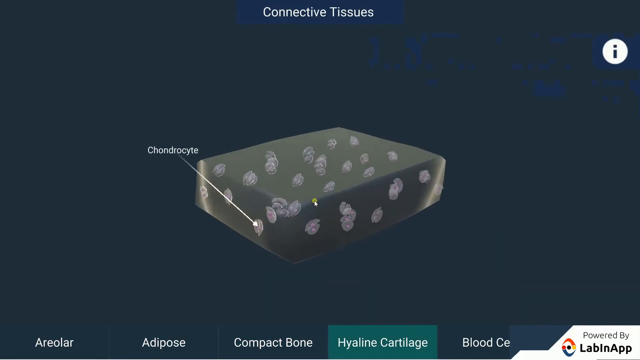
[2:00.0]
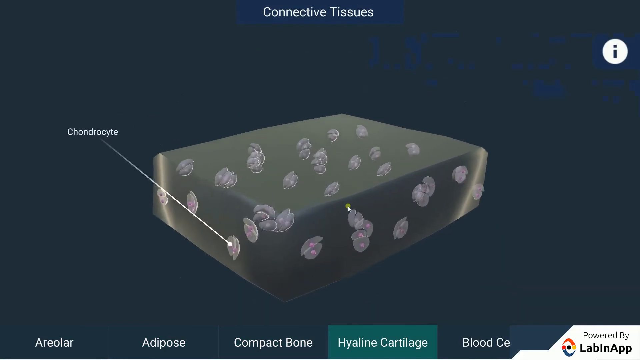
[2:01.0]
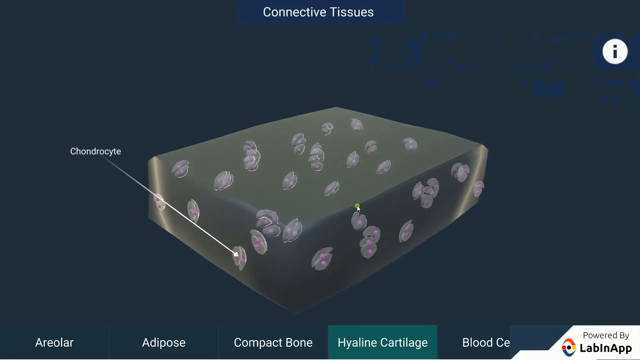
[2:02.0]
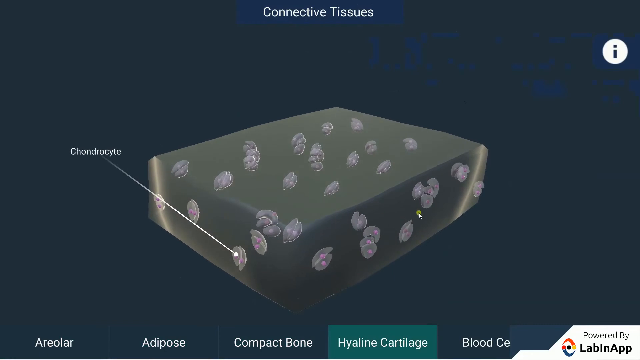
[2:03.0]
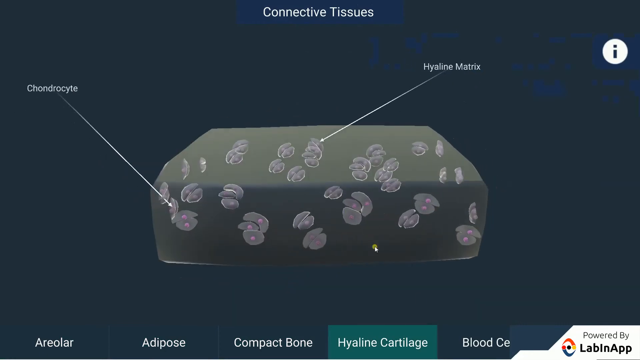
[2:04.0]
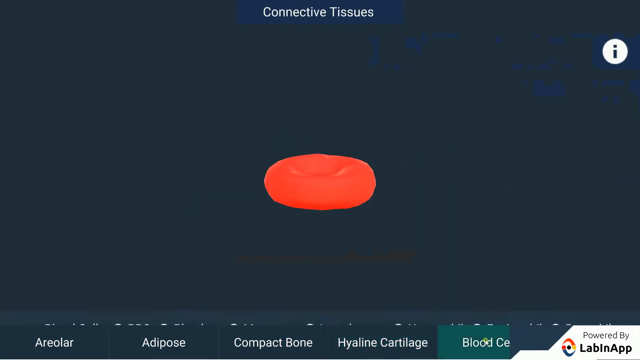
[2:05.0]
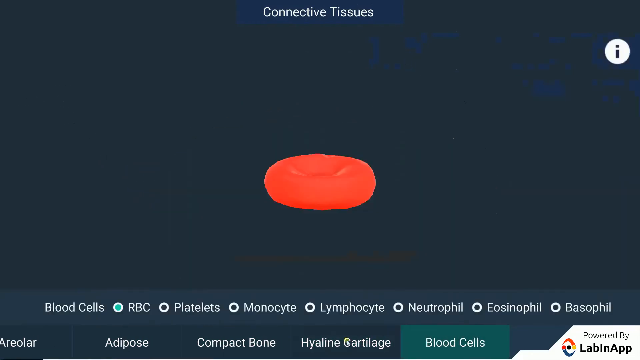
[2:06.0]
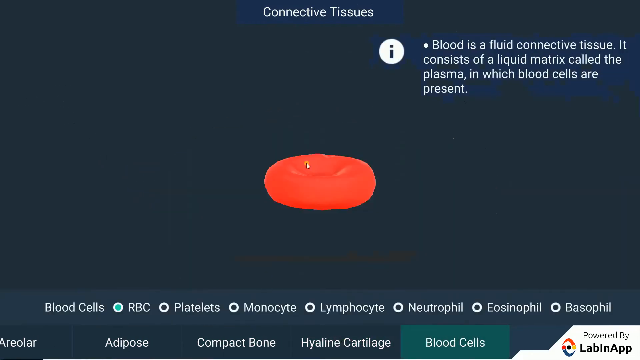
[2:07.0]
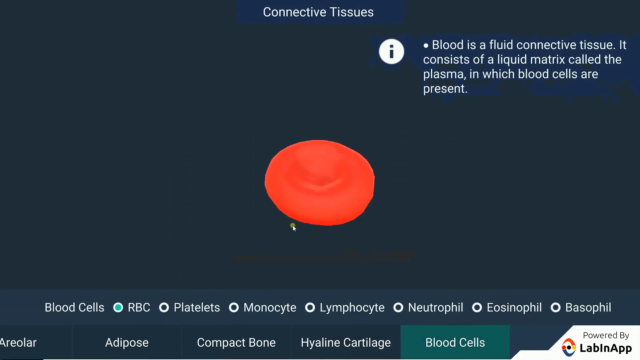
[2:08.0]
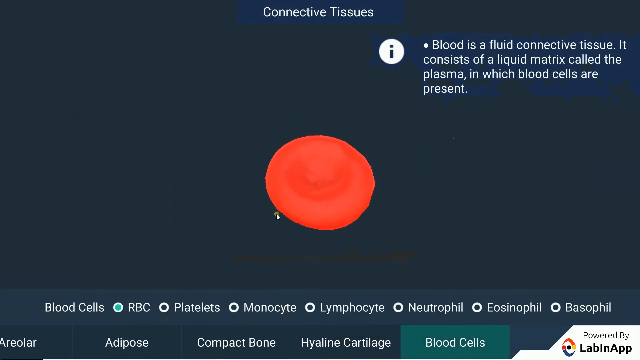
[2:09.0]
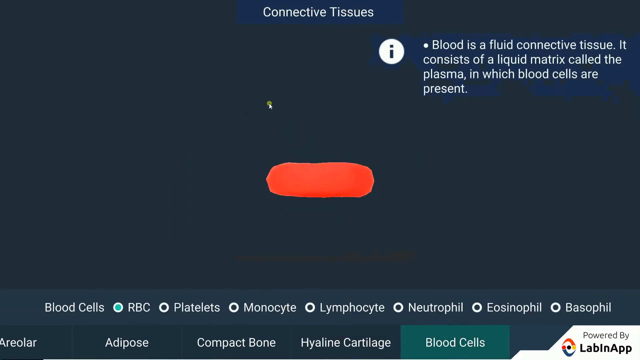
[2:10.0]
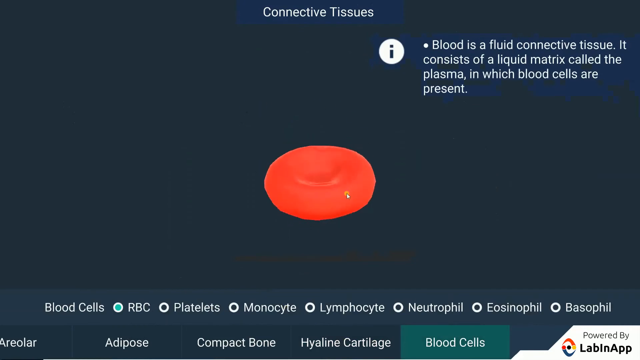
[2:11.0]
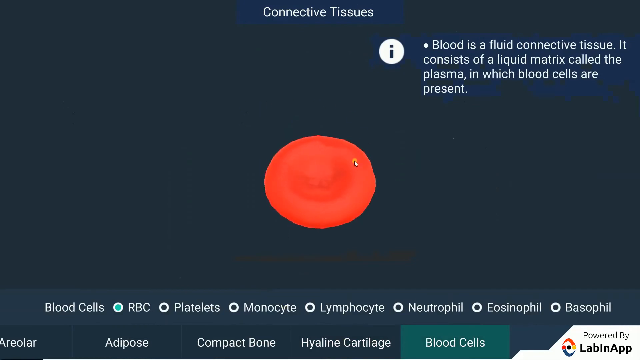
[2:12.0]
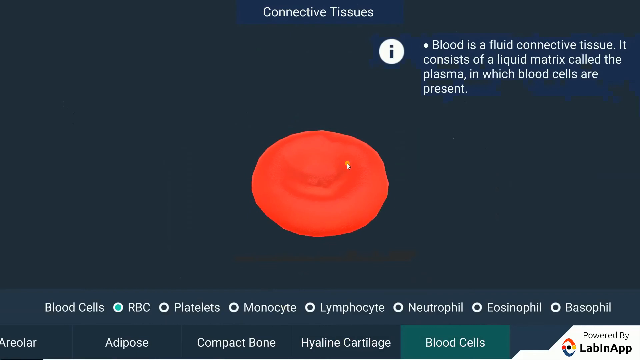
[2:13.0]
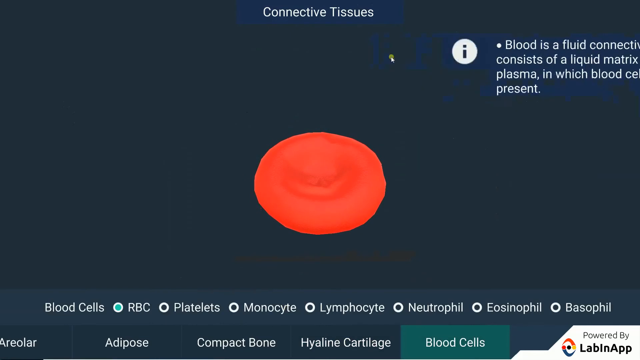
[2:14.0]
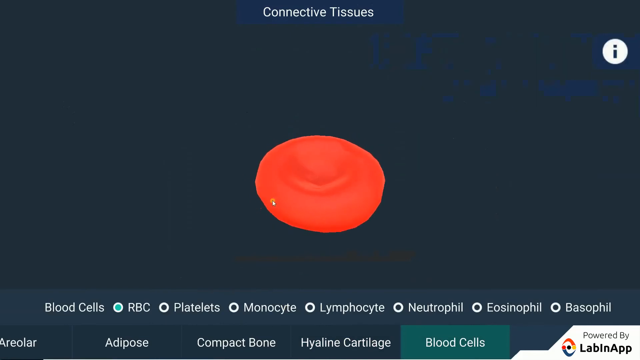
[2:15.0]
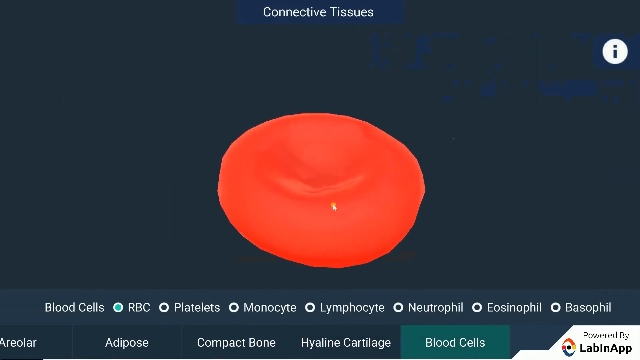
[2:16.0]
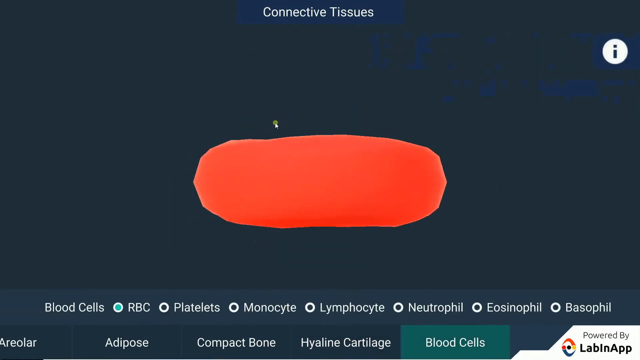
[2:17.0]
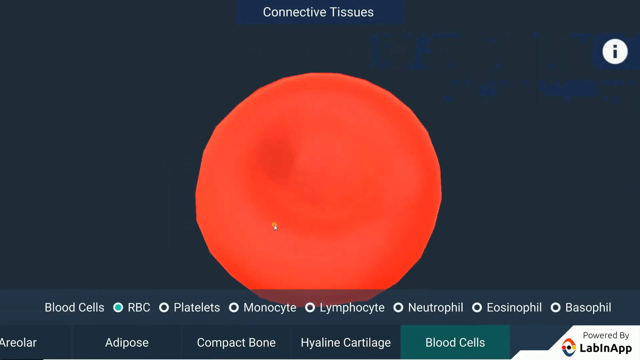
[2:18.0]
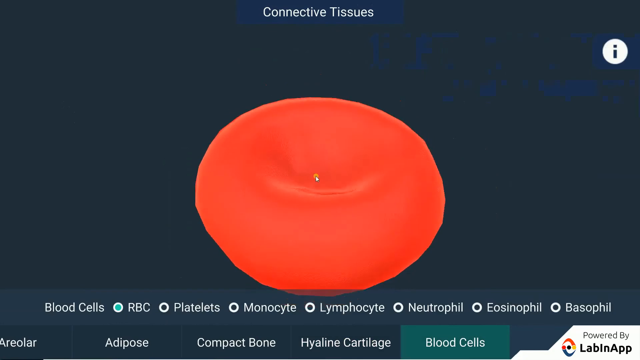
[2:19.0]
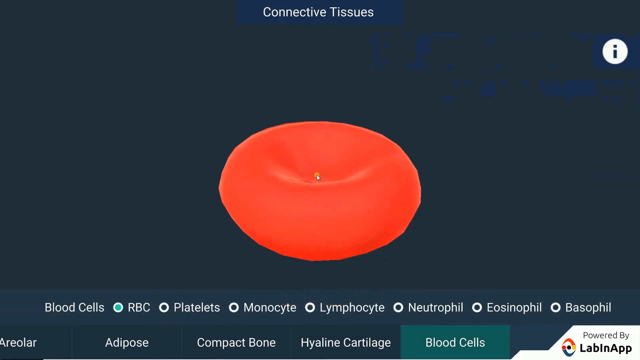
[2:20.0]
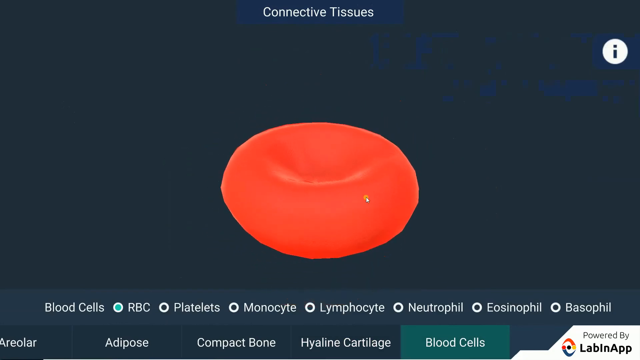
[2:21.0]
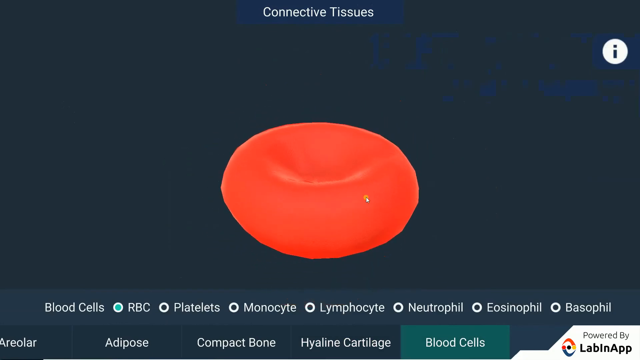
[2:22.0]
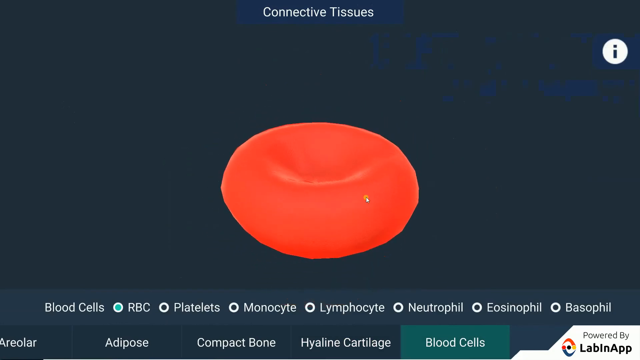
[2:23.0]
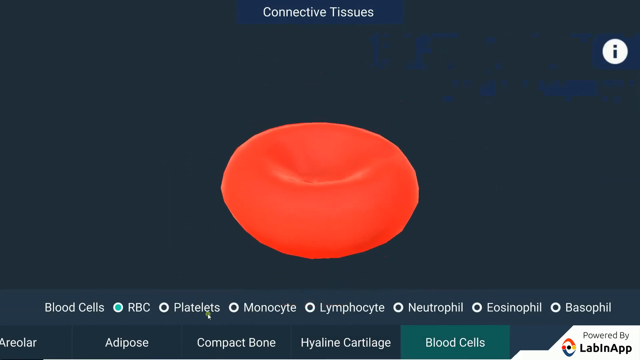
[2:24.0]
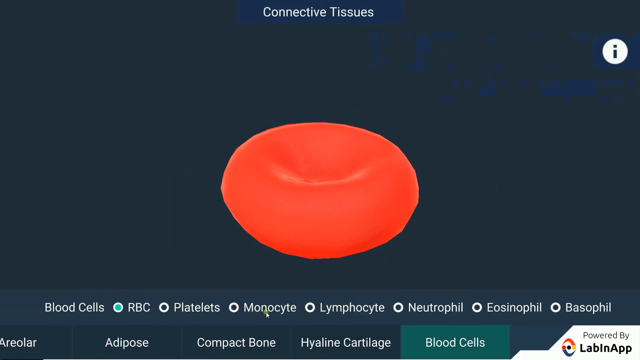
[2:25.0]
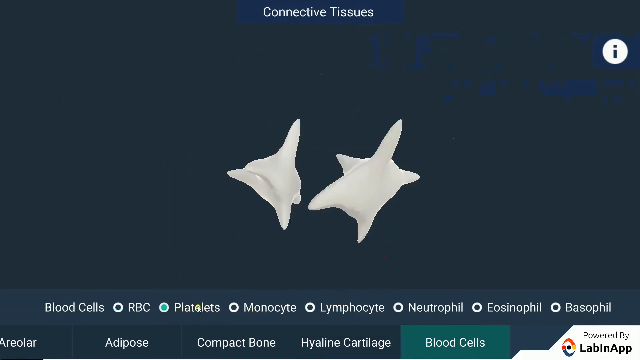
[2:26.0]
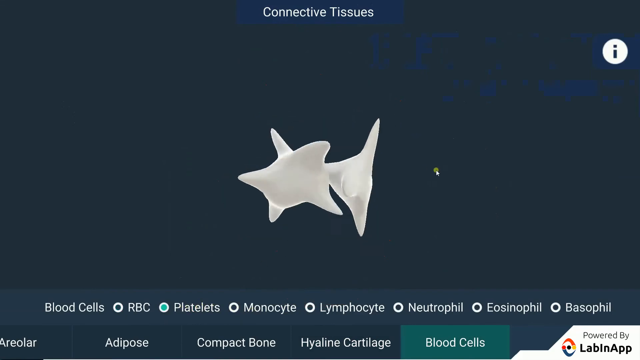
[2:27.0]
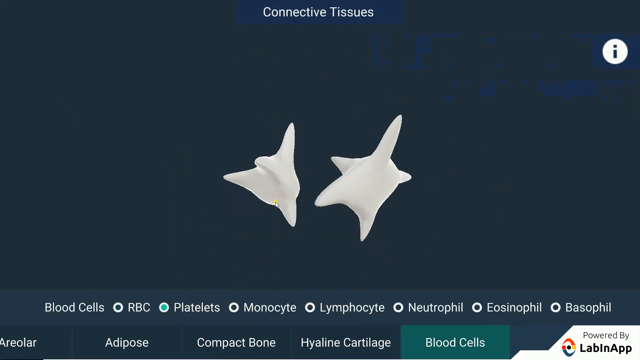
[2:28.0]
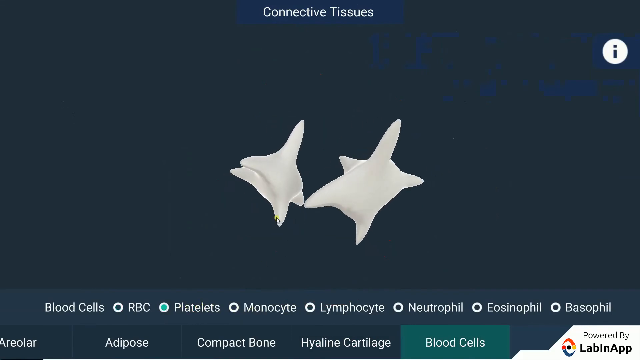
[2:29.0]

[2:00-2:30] The new organ is shown in more detail. It looks like a small rectangular box, dark in color, like gray or dark black, and a little transparent rather than completely opaque. Inside it there seem to be some white or light blue balls that seem to be cells. Two labels then appear indicating different positions: "Chondrocyte" and "Hyaline Matrix." The Hyaline Matrix label seems to point to the layer and dark space of the box, while the Chondrocyte label seems to point to one of the balls, which each have a nucleus in the center and almost look like sea oysters with a pearl in the center. Finally, the cursor clicks the next menu option, "Blood Cell," and the rendering of a blood cell appears on the screen.